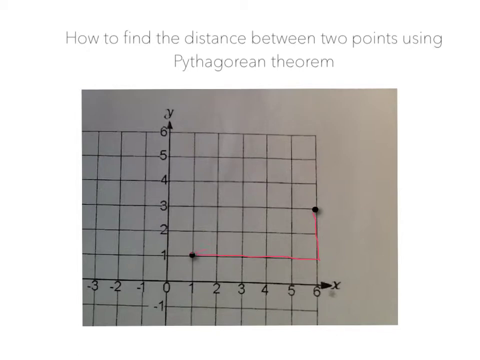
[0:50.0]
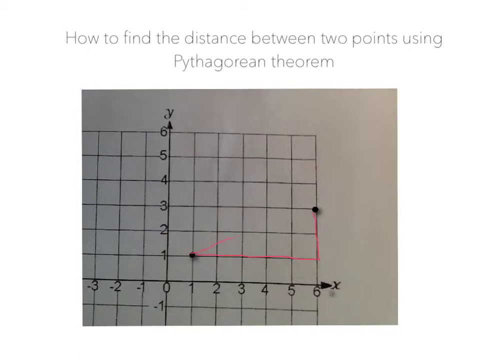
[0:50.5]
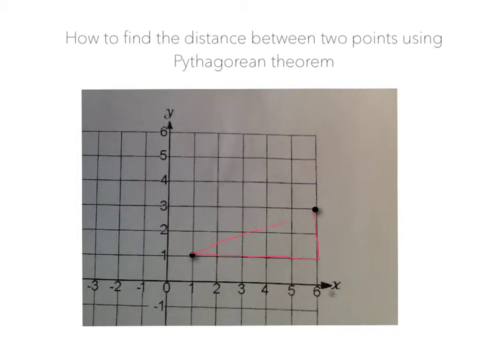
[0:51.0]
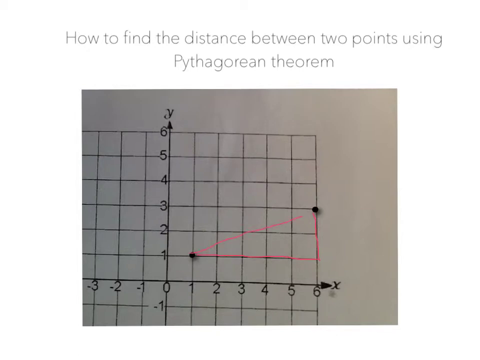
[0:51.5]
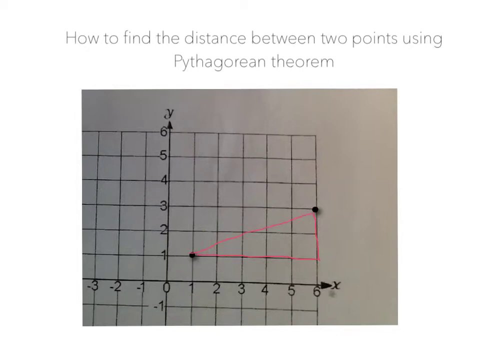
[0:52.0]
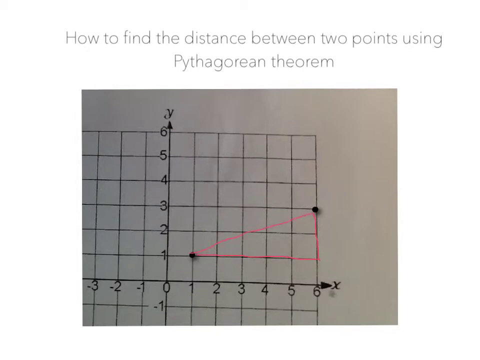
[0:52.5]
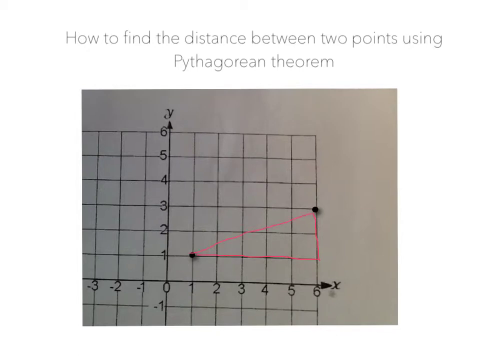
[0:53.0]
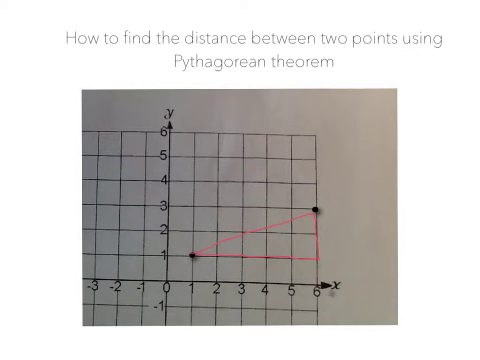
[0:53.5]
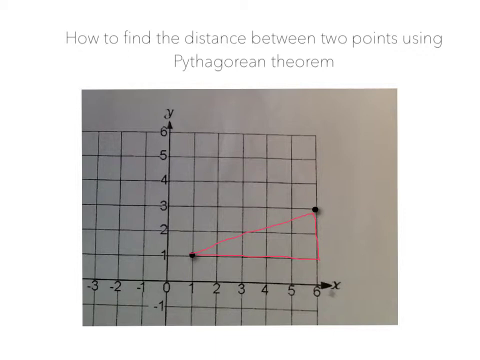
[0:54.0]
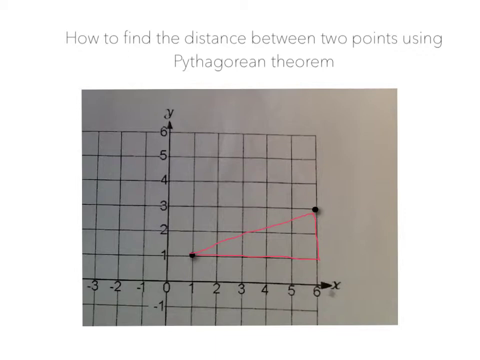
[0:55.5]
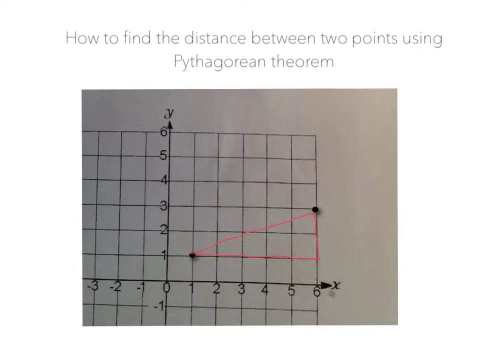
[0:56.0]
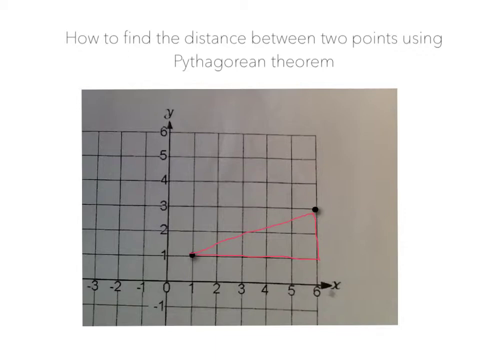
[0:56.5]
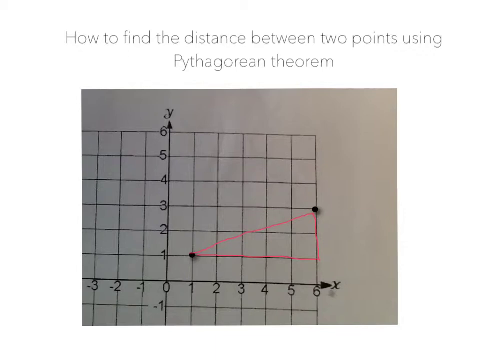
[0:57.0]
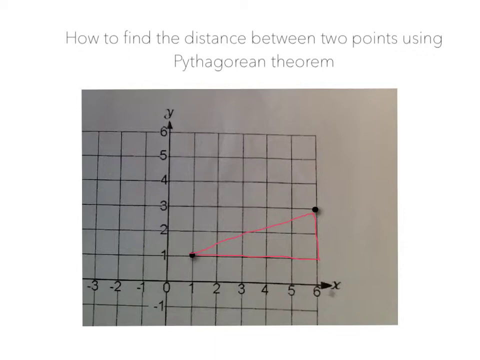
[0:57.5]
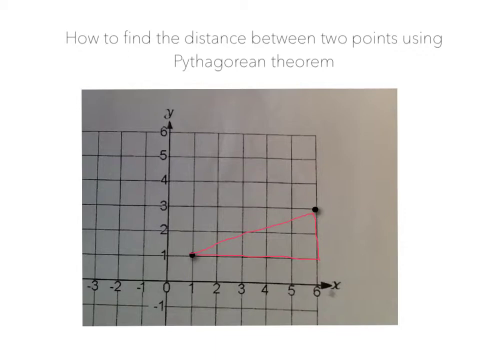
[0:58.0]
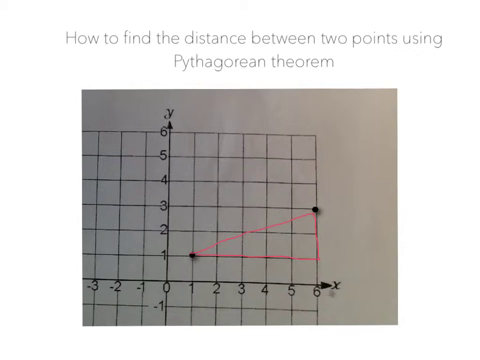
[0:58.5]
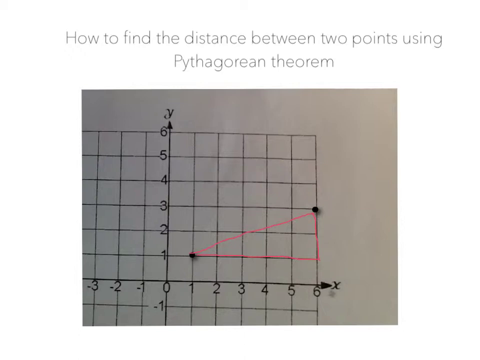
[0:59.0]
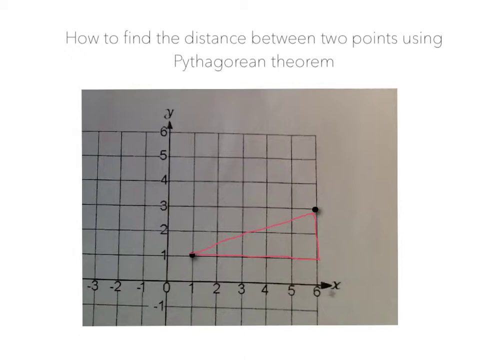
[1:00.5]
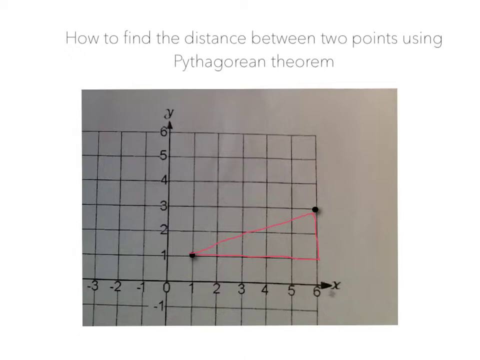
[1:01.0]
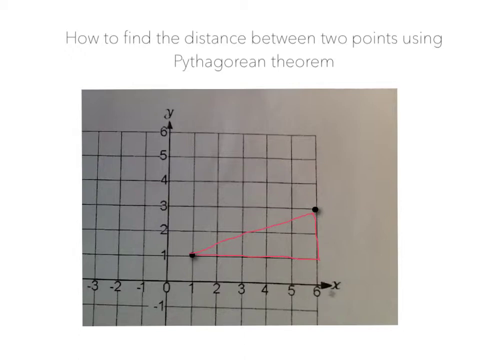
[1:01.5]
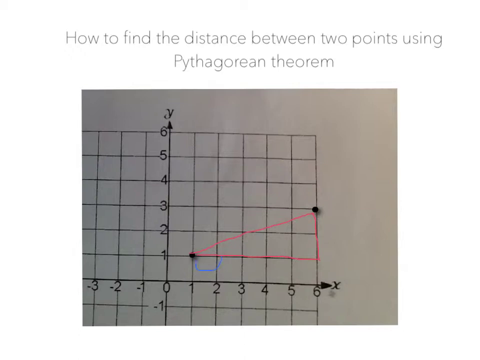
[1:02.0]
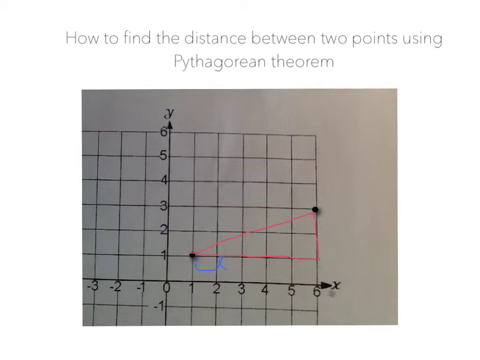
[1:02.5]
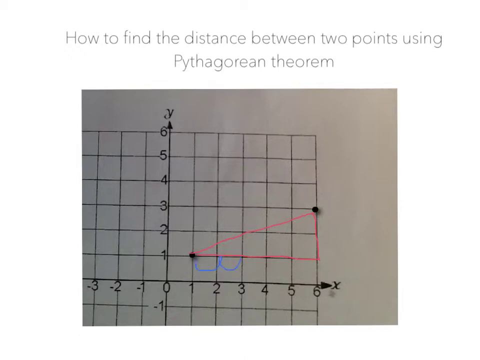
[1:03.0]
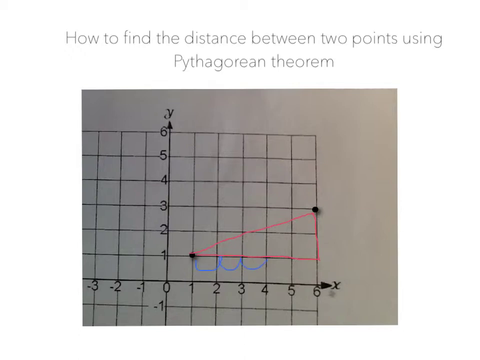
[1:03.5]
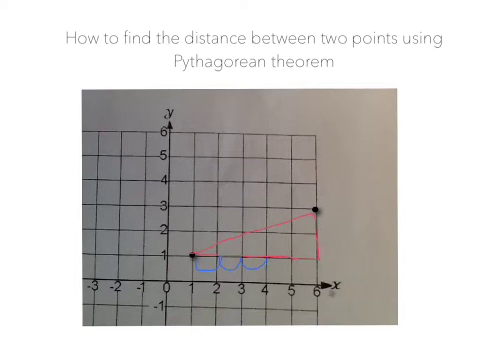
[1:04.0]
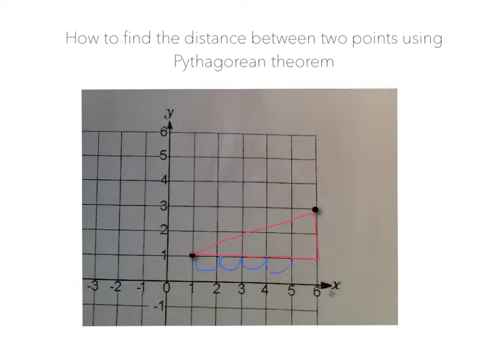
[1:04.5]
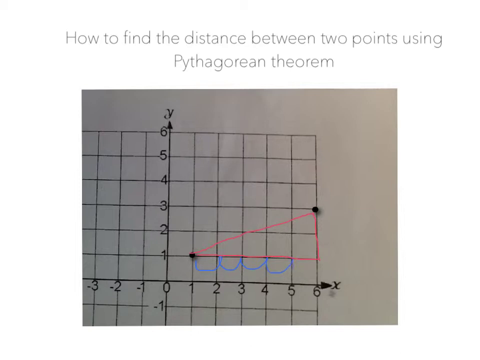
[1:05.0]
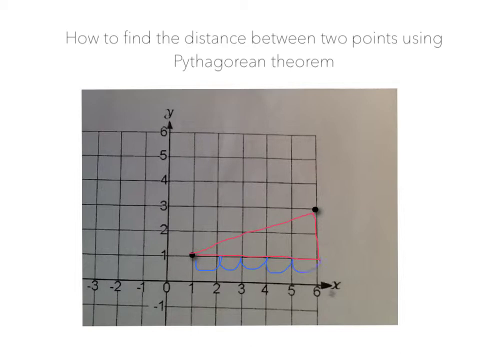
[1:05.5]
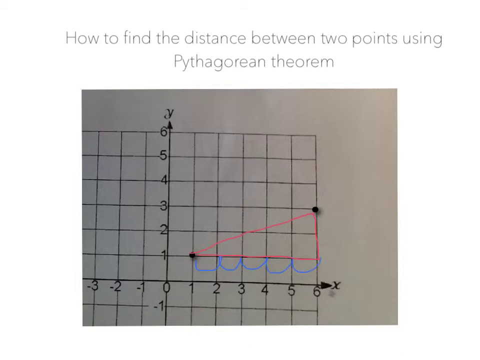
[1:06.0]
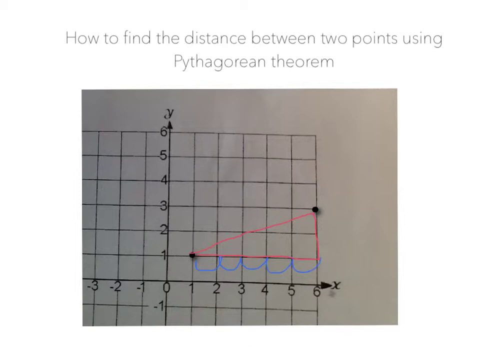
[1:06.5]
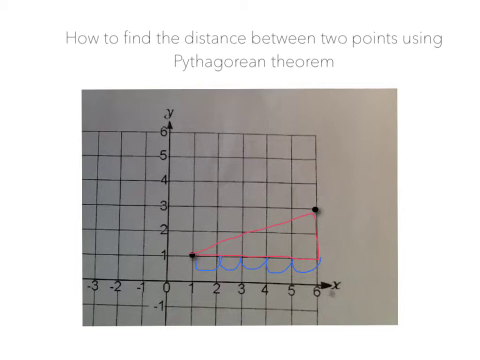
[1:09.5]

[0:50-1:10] The partial graph on the grid is shown, with ten columns (the first partially obscured), eight rows, the Y axis along the line between the fourth and fifth columns and the X axis along the line between the sixth and seventh rows. Numbers along the lines show the y-axis from 6 at the top to 0 at the intersection, then -1 and -2, and the x-axis from -3 on the left to 0, then 1 to 6. Two lines of light gray text above the graph read "How to find the distance between two points using" and "Pythagorean theorem". Two dots are on the graph, at 1 y/1 x and at 3 y/6 x. A red line runs along the grid line from the 1x dot to the 6x/1y intersection, then extends upwards until it stops at the 3y/6x dot. After a few seconds a third line appears, running directly from the first dot to the second, so the three red lines form a triangle. A few seconds later, blue semicircles appear along the bottom line of the triangle, running from the 1y/1x dot to the 1y/6x intersection. Each half circle takes up the width of one box and extends about halfway down the box; there are five of them.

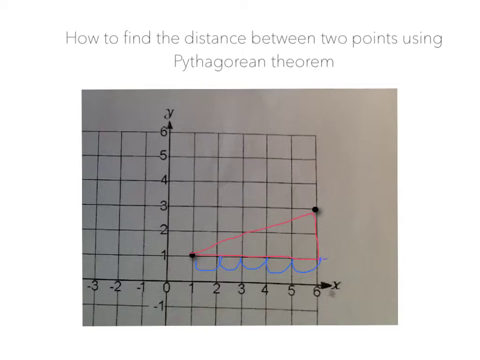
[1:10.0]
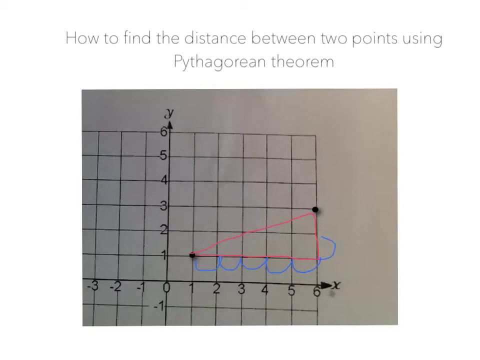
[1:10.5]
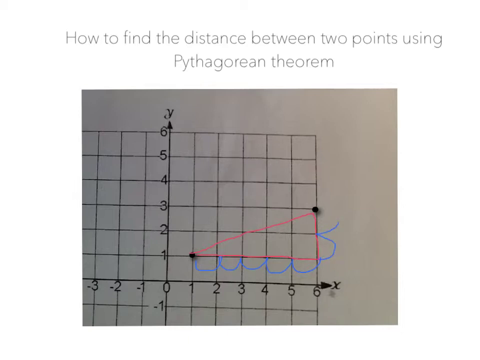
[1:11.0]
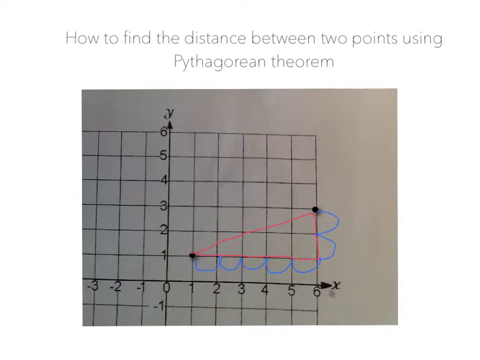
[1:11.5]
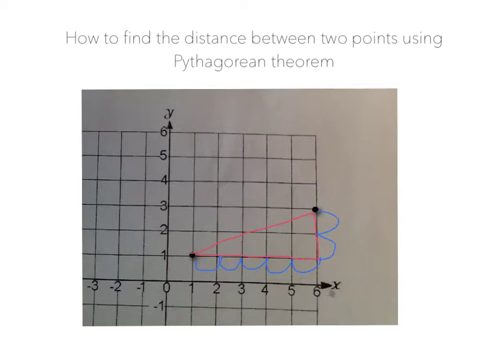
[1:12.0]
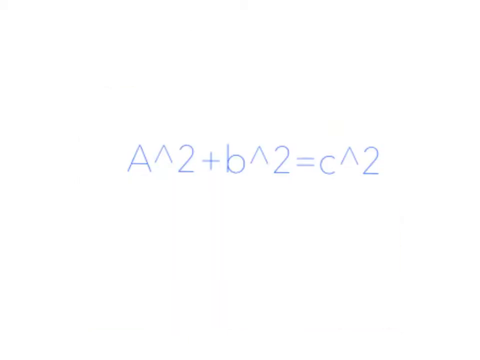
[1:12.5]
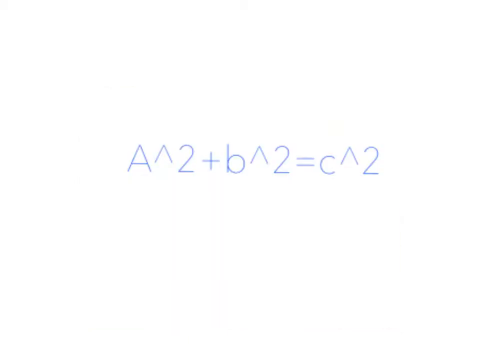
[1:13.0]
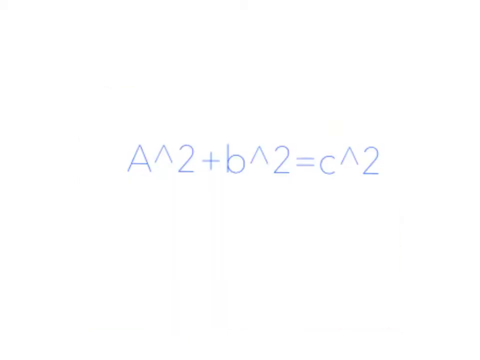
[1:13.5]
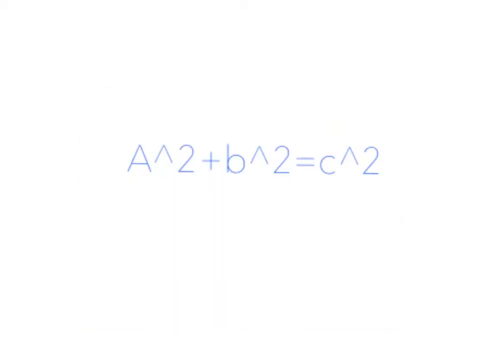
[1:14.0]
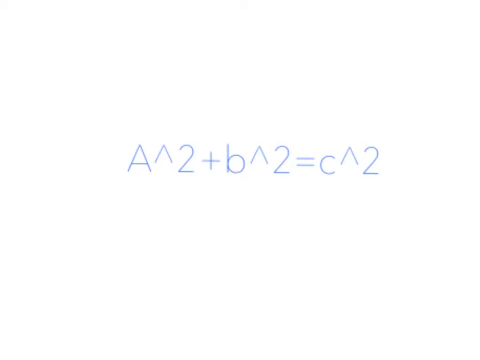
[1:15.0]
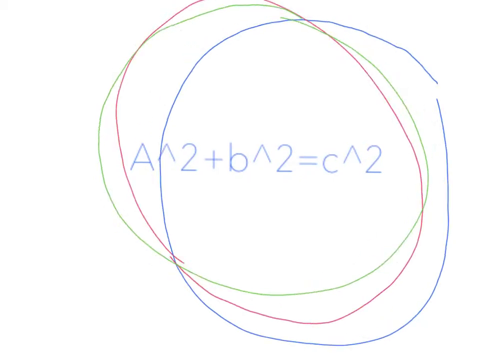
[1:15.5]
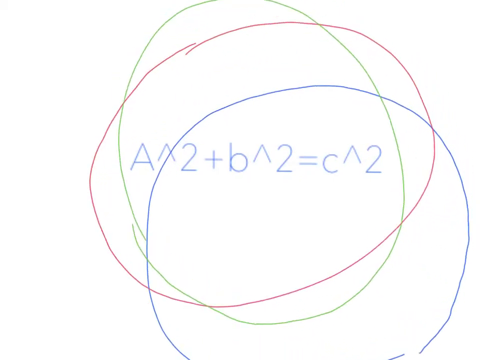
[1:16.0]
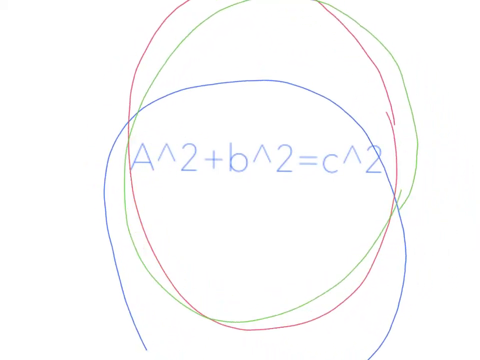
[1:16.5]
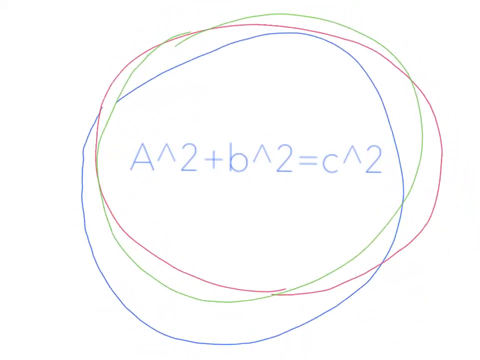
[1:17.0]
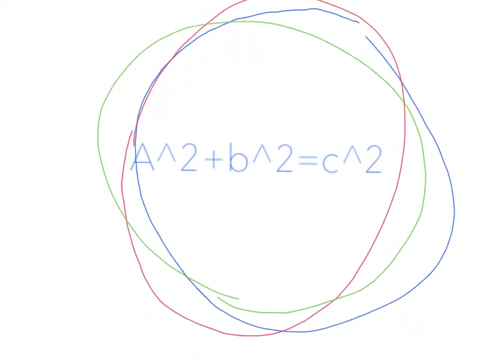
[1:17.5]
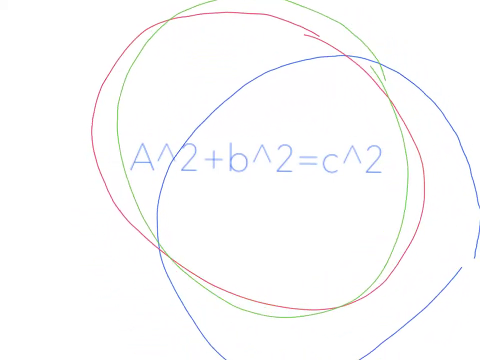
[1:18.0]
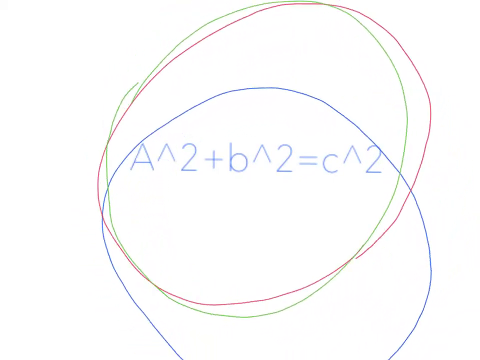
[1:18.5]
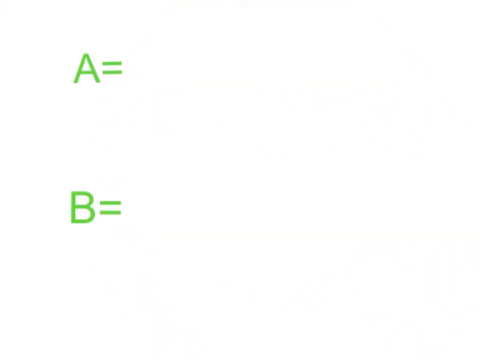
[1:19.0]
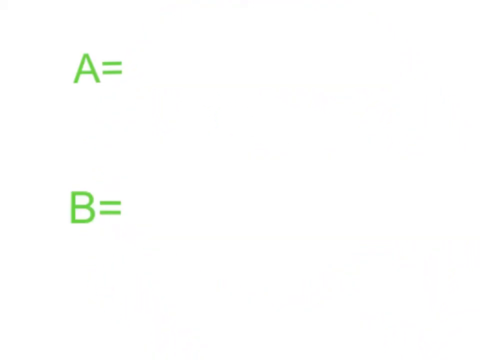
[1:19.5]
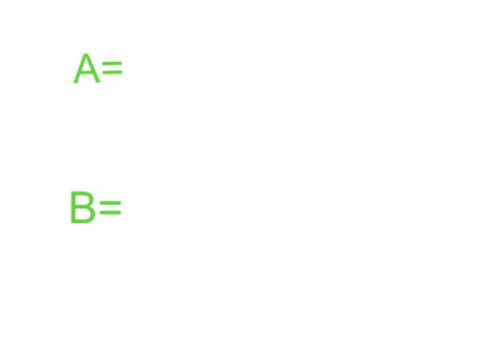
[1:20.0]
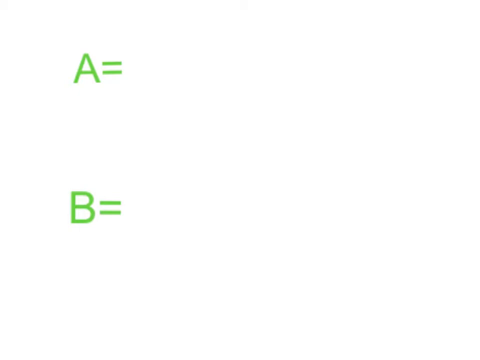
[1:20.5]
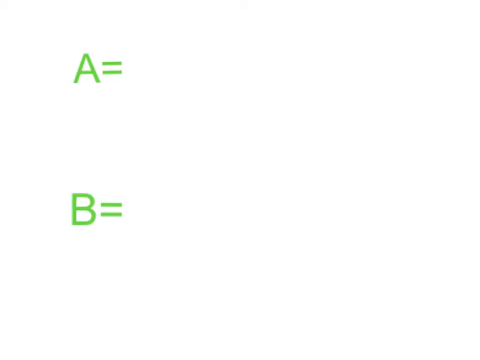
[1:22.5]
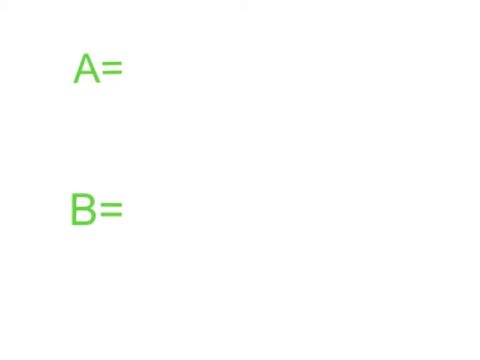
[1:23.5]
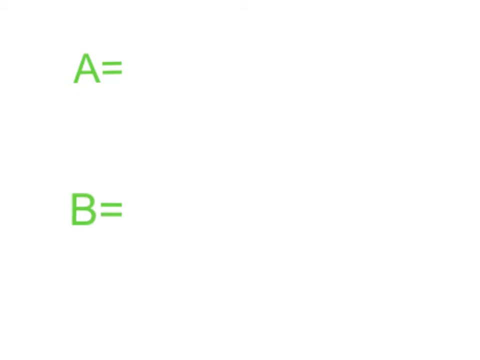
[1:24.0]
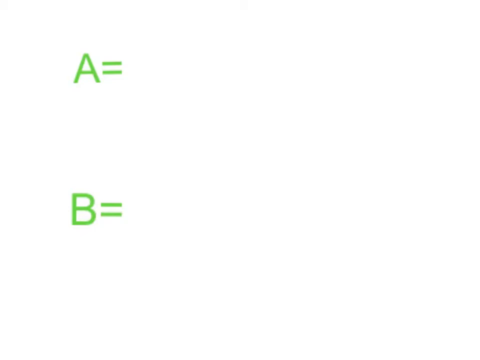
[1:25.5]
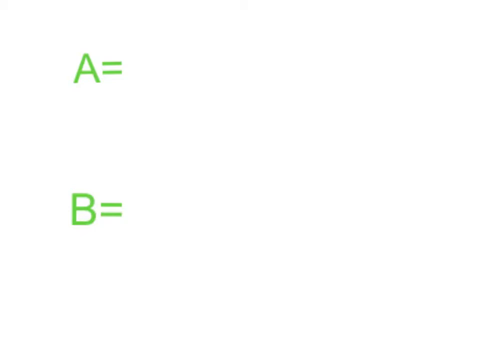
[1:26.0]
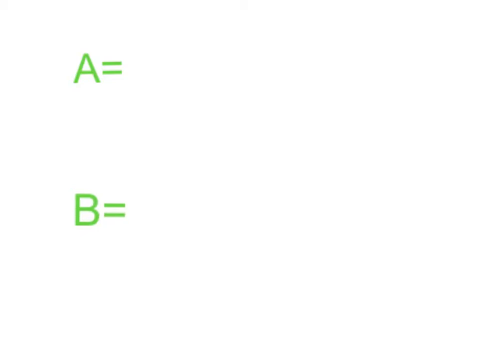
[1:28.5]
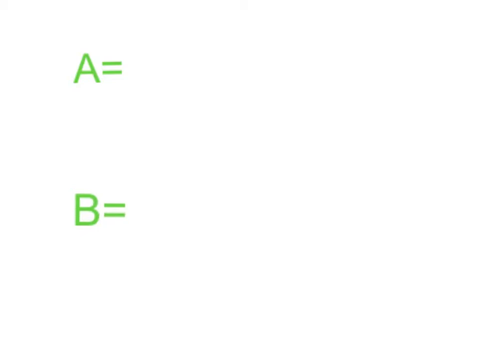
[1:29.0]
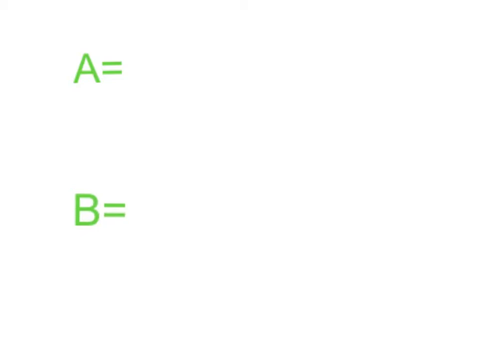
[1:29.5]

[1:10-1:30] A still image is on the screen at first, and after a few seconds it switches out. The screen disappears and an equation appears in the center, reading "A^2+b^2=c^2", all in light blue. After a few seconds, three circles that look hand-drawn appear, one red, one green and one blue, rotating irregularly around the equation. A few seconds later the screen changes: everything disappears and two bright green lines appear, the first saying "A=" and the second "B=". After a few seconds the "B=" seems to shift down a little, and a few seconds after that it moves a little to the right.